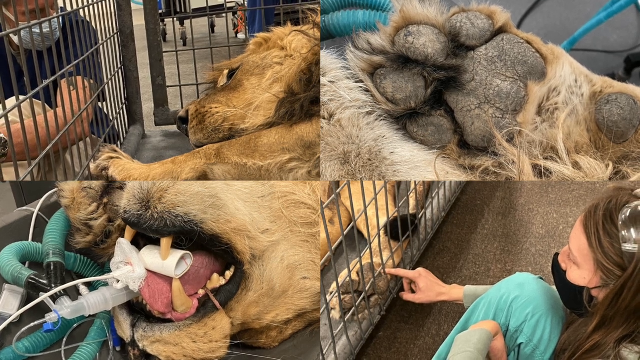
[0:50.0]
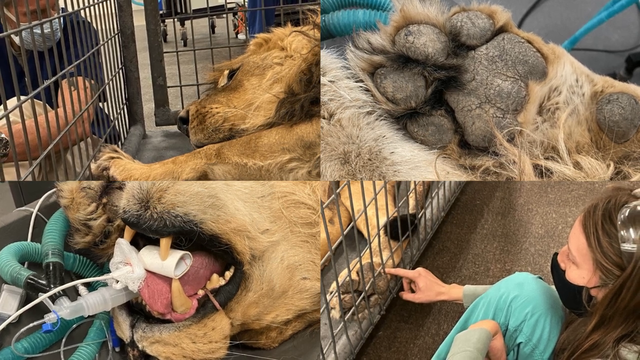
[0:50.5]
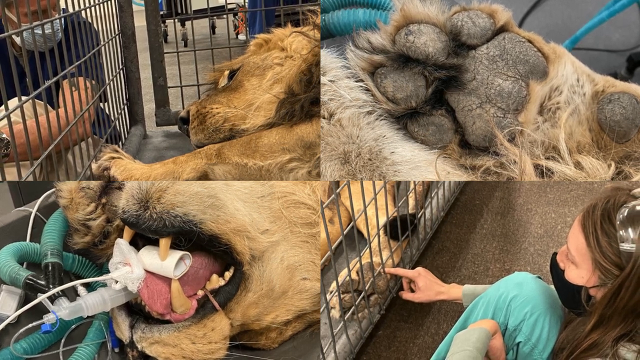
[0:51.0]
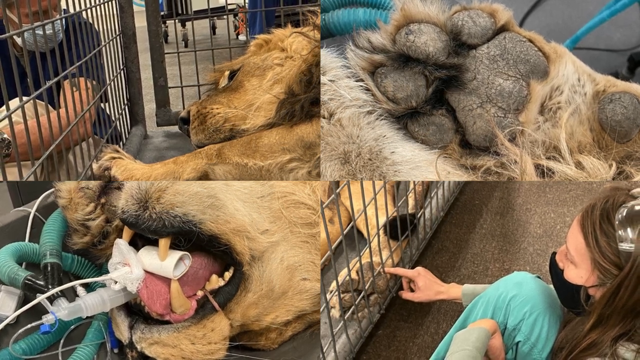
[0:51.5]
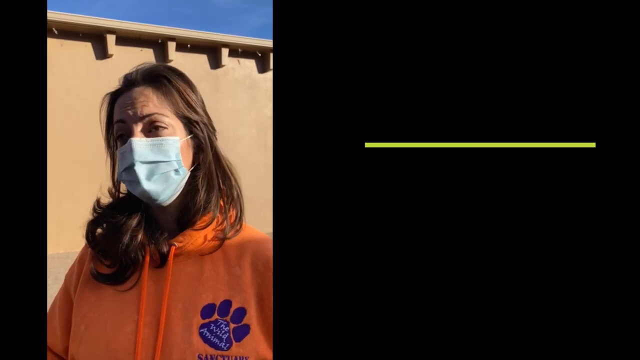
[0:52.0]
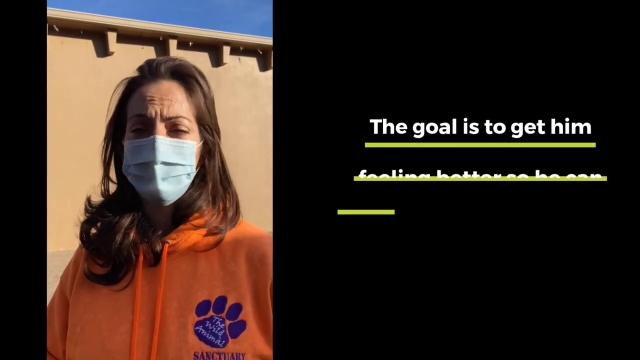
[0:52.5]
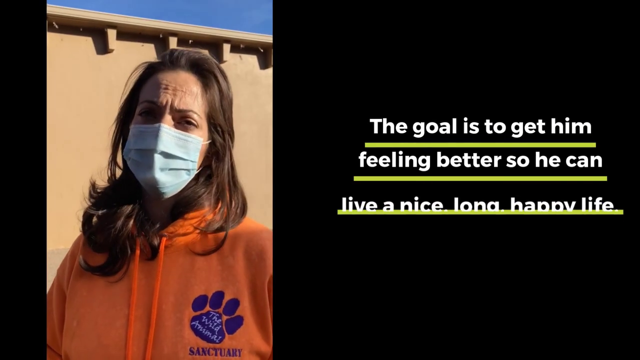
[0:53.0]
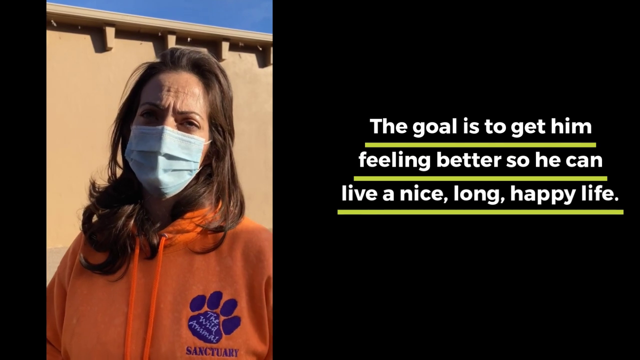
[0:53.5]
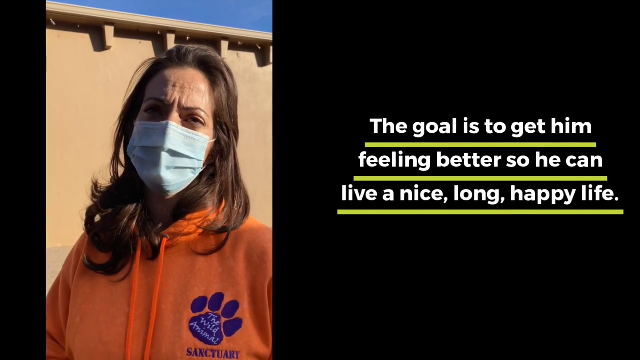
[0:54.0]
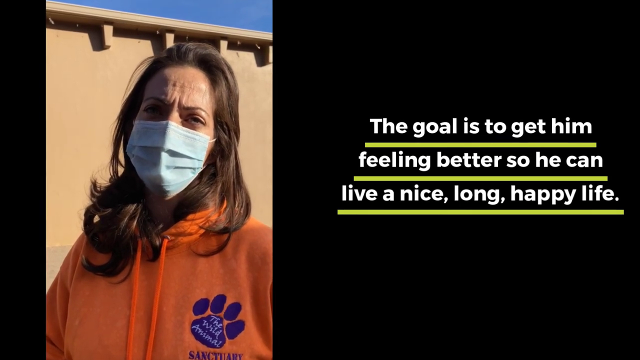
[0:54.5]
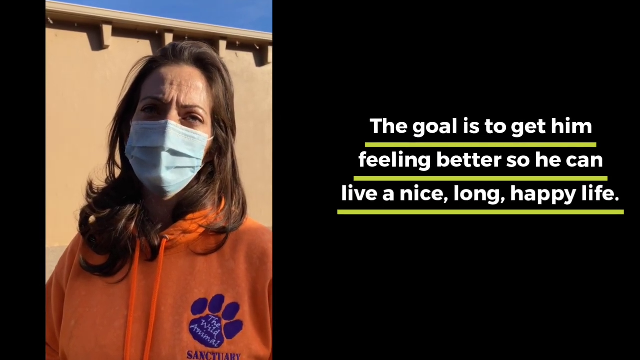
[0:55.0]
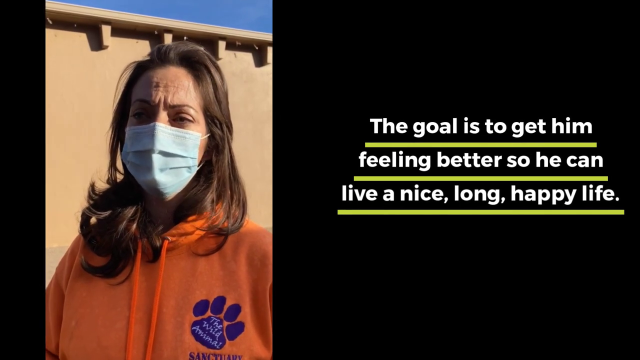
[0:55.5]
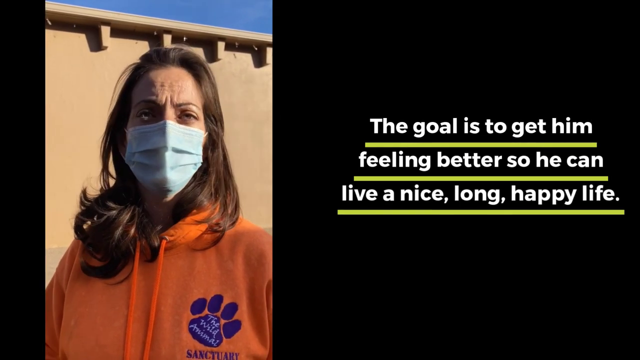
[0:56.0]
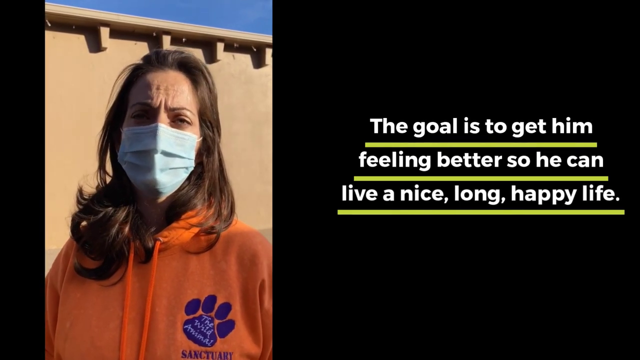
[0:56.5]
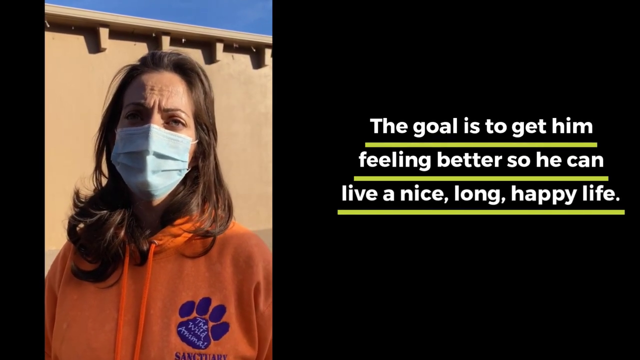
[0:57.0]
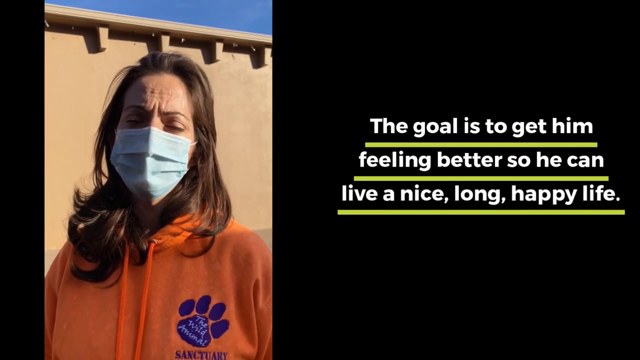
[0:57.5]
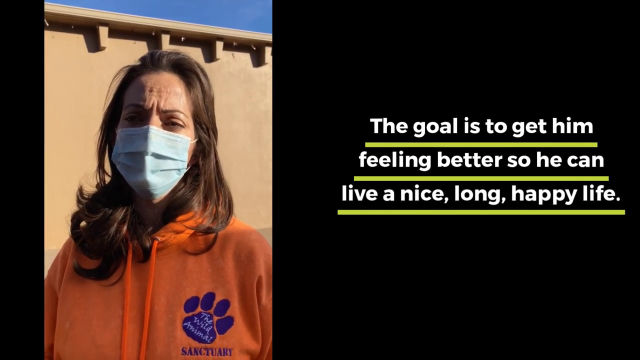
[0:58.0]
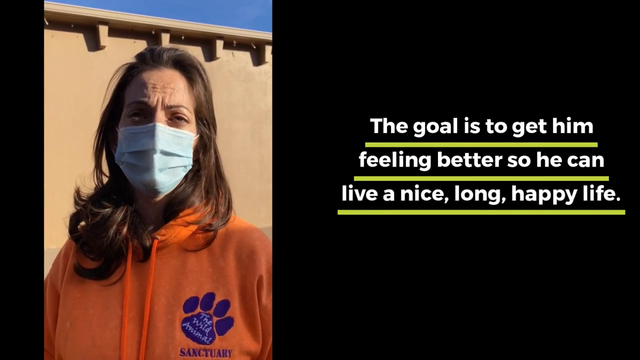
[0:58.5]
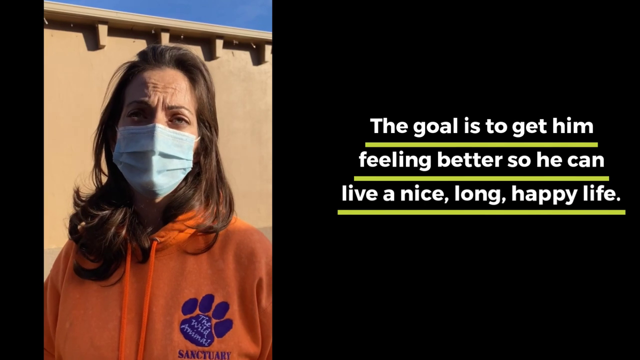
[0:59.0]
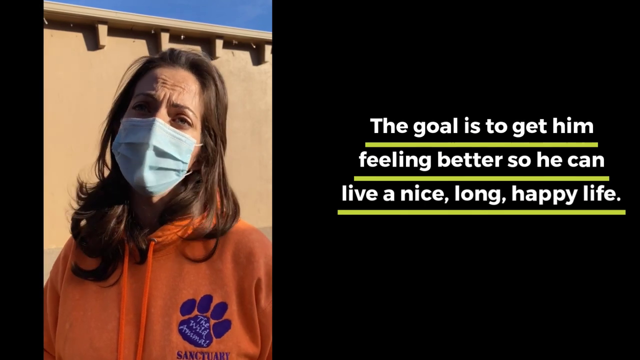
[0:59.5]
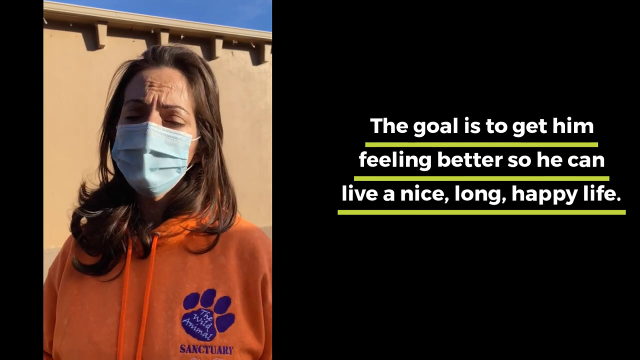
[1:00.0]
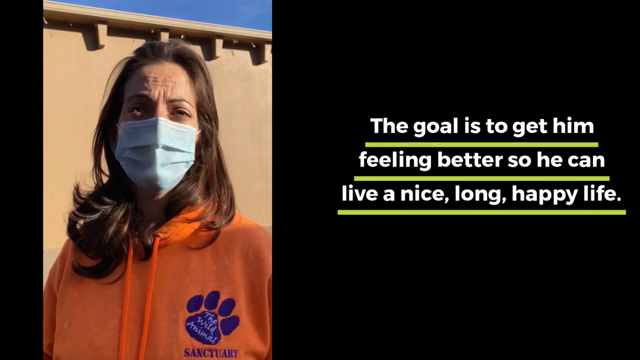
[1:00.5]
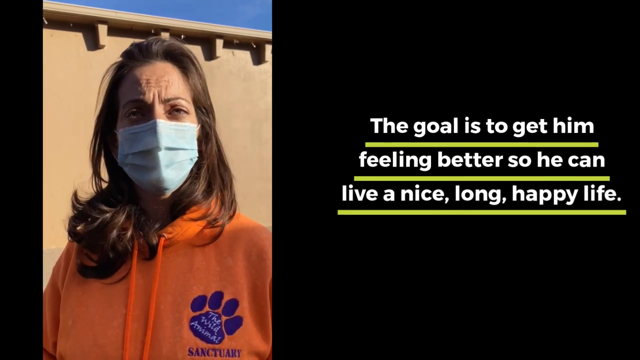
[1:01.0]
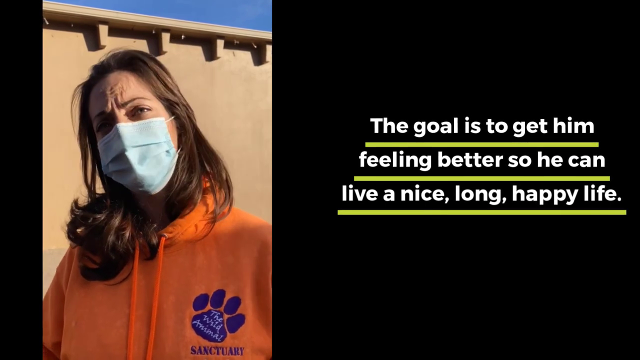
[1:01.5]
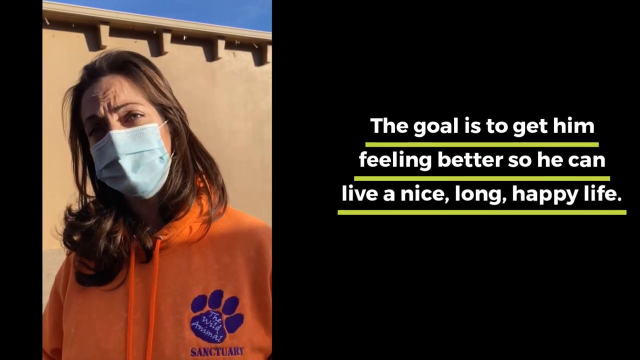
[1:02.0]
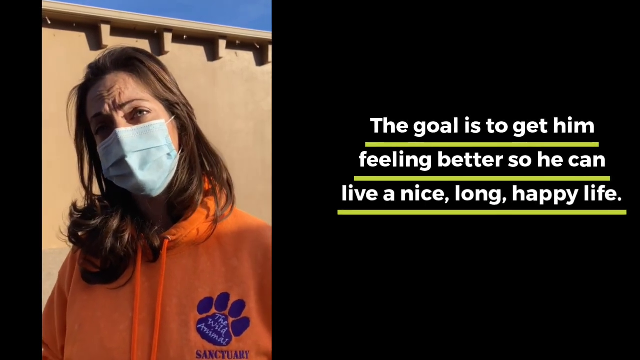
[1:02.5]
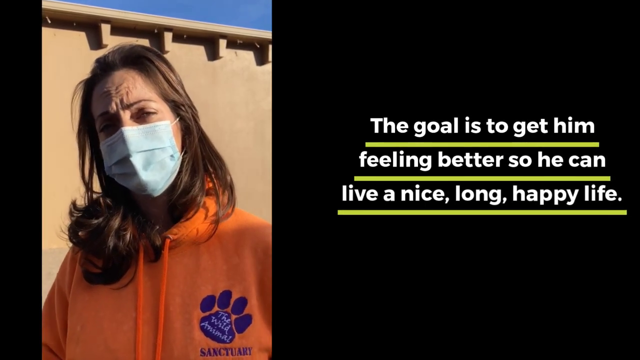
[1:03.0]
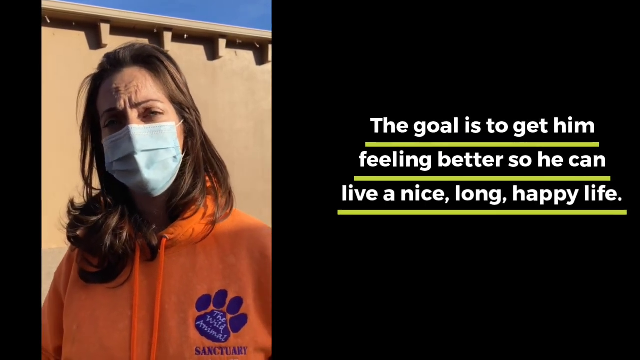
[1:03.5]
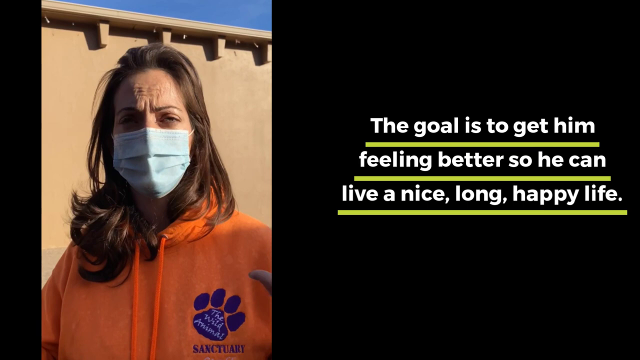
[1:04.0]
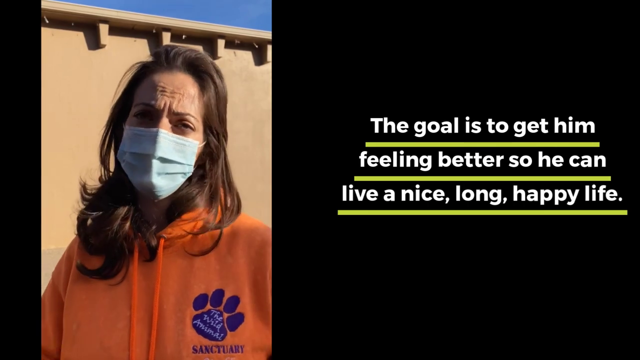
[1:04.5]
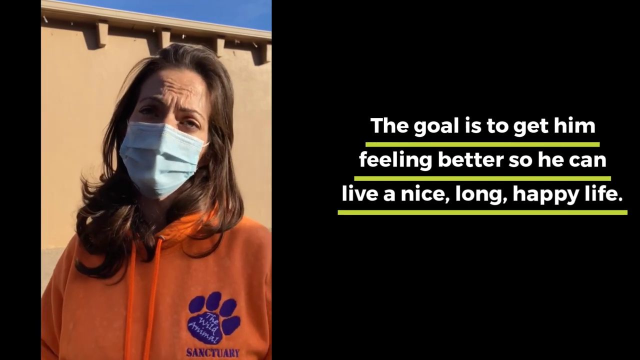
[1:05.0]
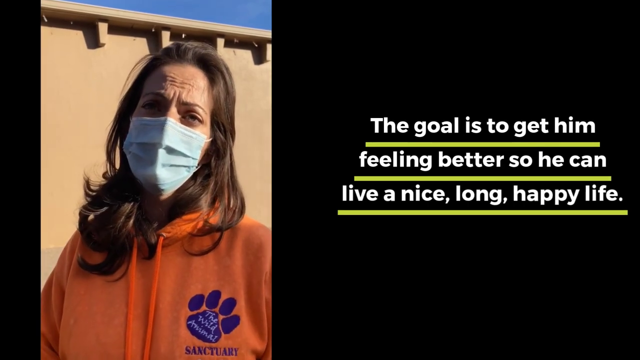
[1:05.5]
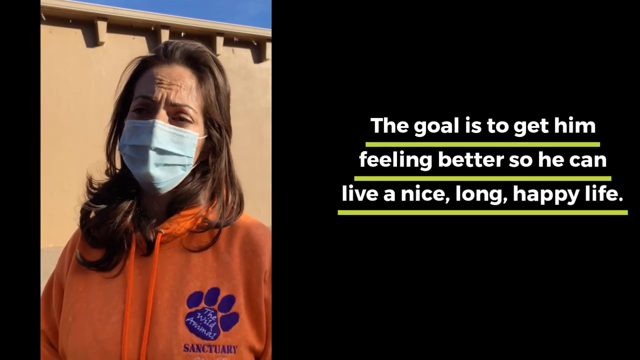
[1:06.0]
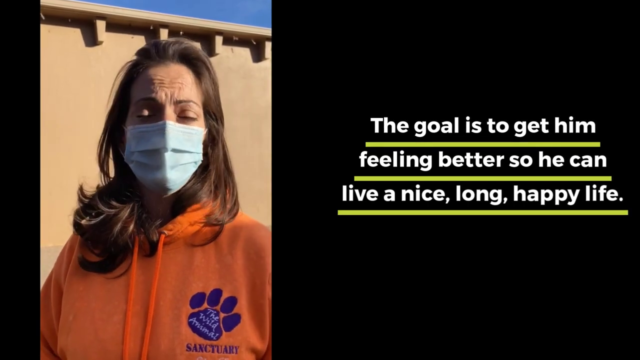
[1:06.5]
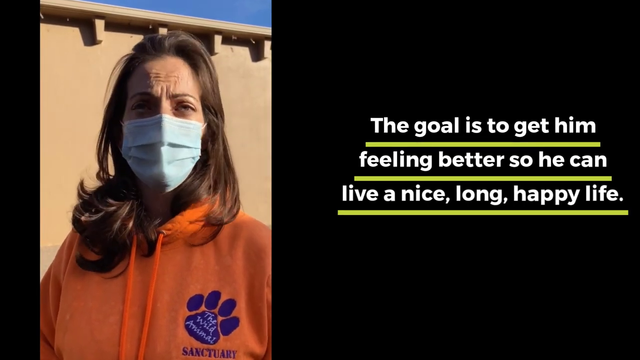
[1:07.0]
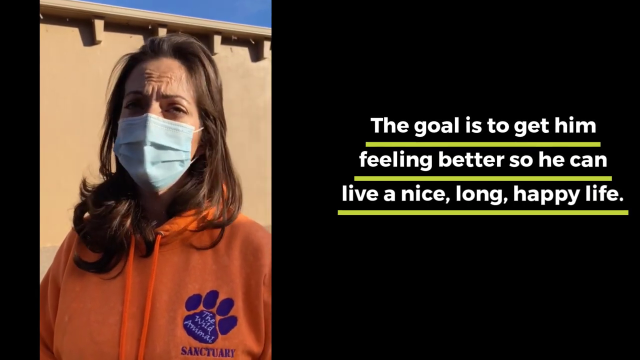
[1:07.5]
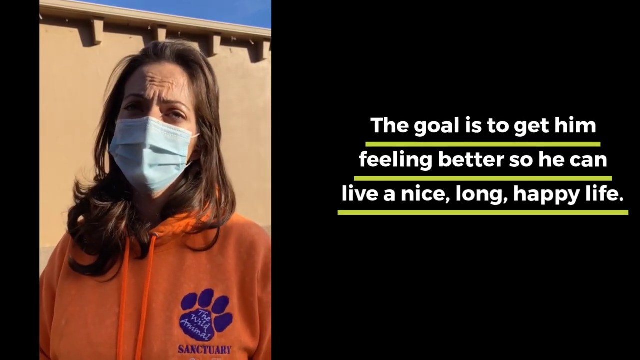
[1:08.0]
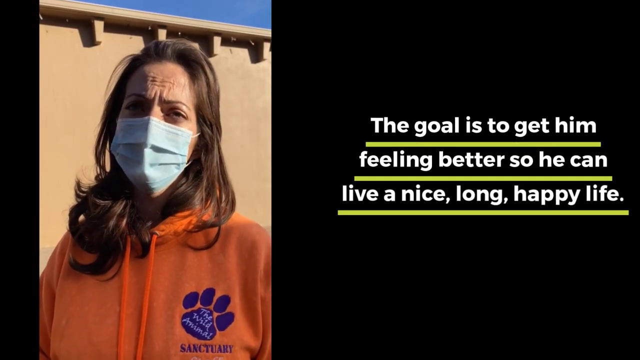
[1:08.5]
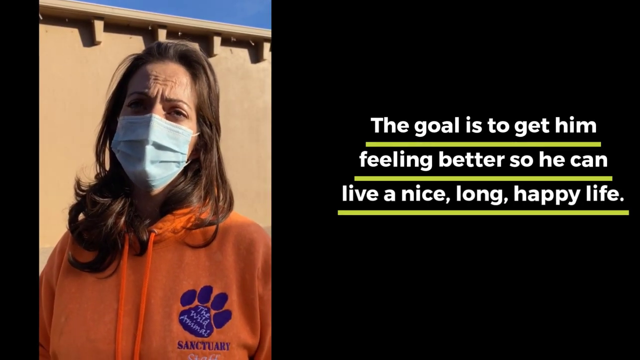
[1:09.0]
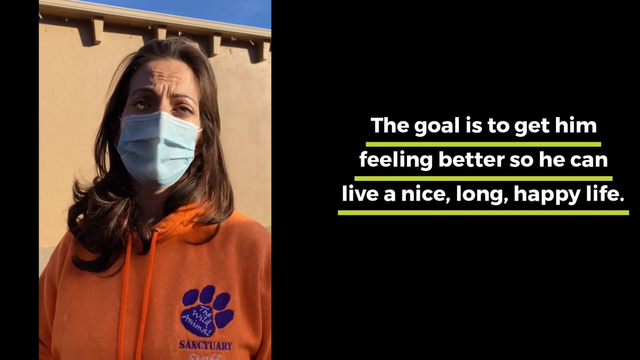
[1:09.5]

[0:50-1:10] A collage of four images fills the frame. Top left: a vet in a blue shirt and medical mask sitting next to a cage where a lion is laying inside with its head down, looking very sick. Top right: a close-up of the lion's paw, which looks gray, dry and very cracked. Bottom left: a close-up of the lion's mouth; the lion looks like it is laying on its back under anesthesia, its mouth open, with a white tube object underneath its tongue and other tubes and wires hooked up to devices connected to the lion. Bottom right: what looks like a vet sitting next to a cage, sticking her finger in and touching the bottom of a lion's foot, as the lion seems to be laying down with its foot against the cage. The scene changes to a black screen with a tall, narrow video on the left of a woman with wavy shoulder-length brown hair and brown eyes, wearing a blue medical mask and an orange hoodie with orange drawstrings hanging down and a blue paw print over her left chest. Text comes up on the right side reading "the goal is to get him feeling better so he can live a nice long happy life." The woman speaks, her eyebrows looking kind of scrunched together as if she is concerned and sad.